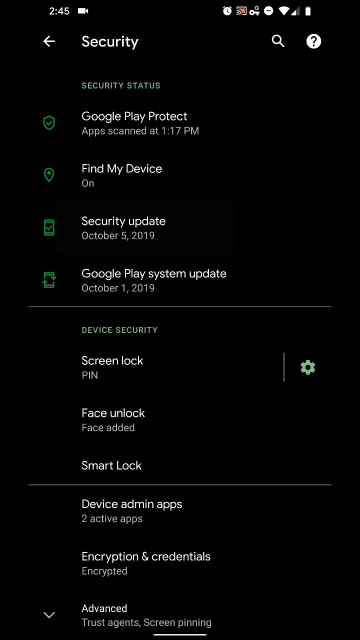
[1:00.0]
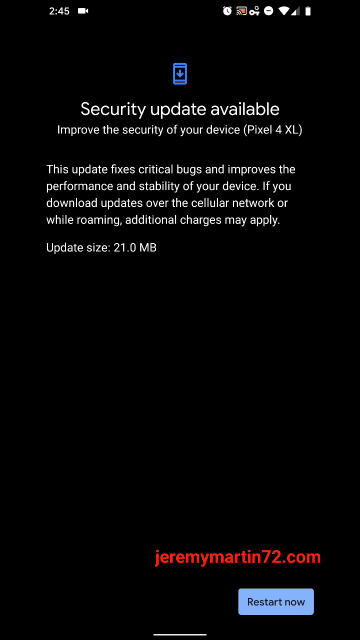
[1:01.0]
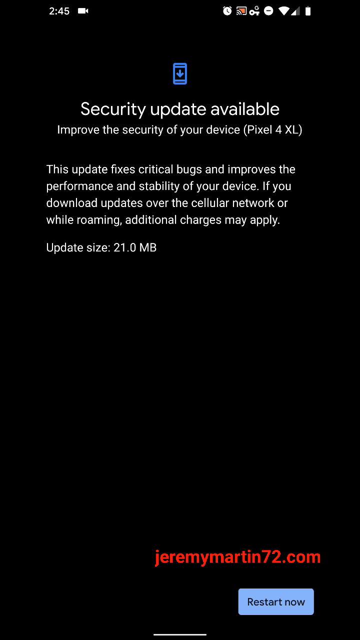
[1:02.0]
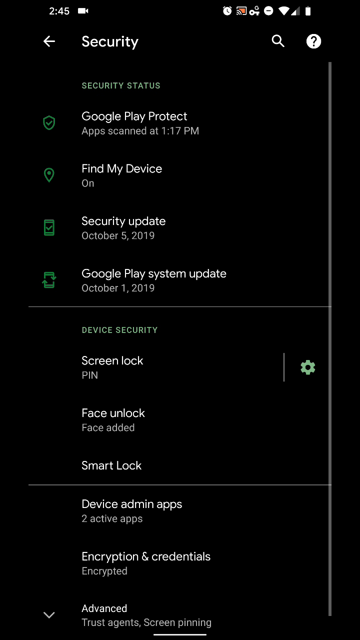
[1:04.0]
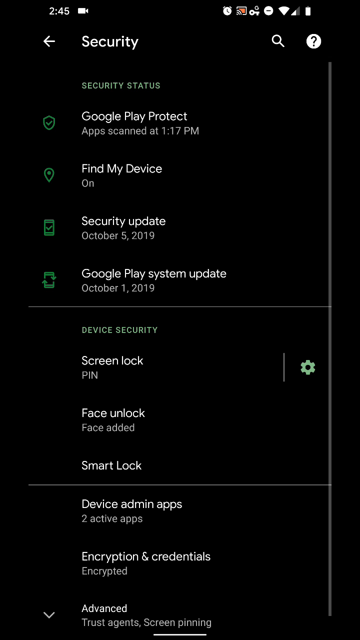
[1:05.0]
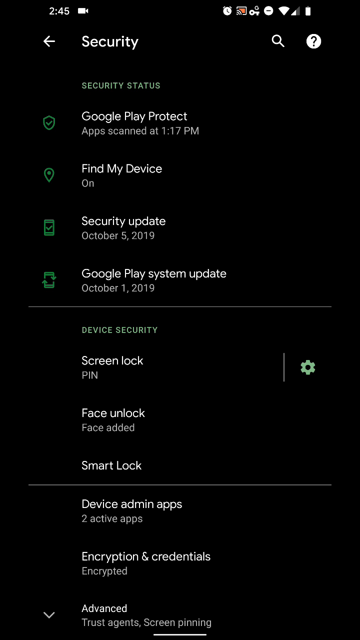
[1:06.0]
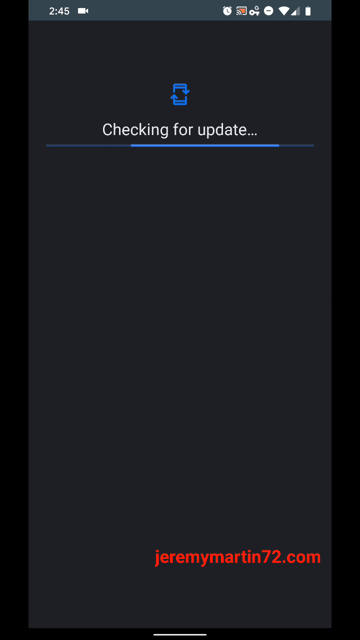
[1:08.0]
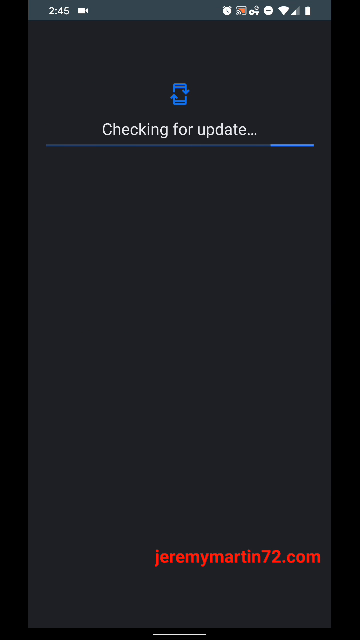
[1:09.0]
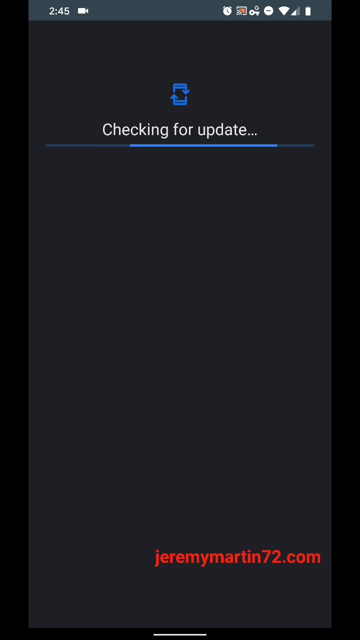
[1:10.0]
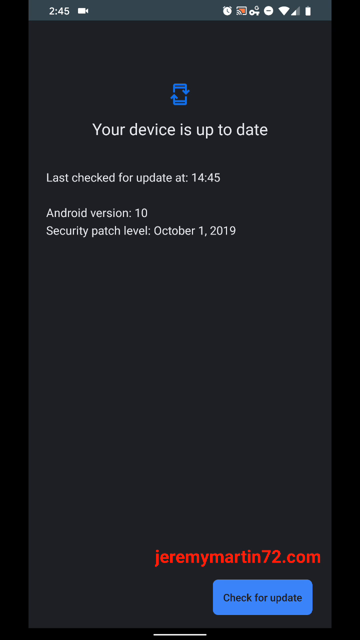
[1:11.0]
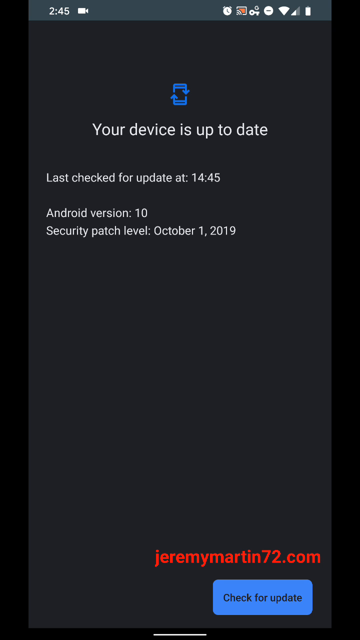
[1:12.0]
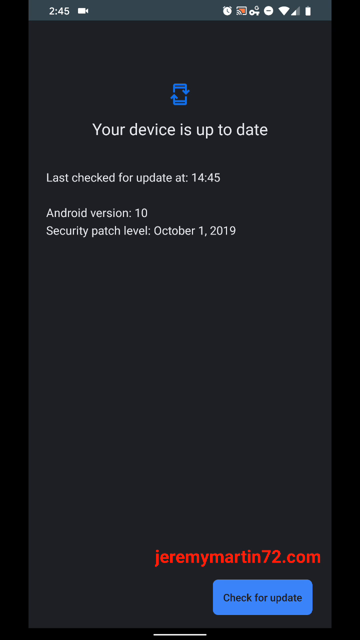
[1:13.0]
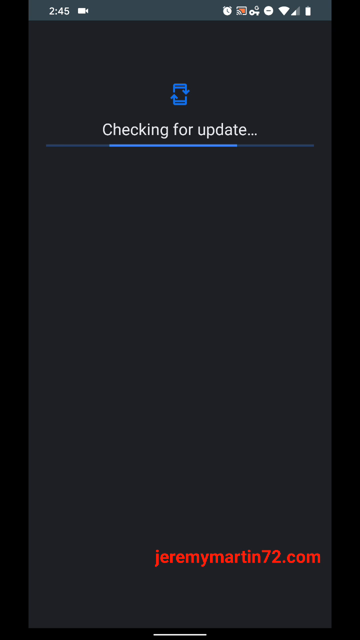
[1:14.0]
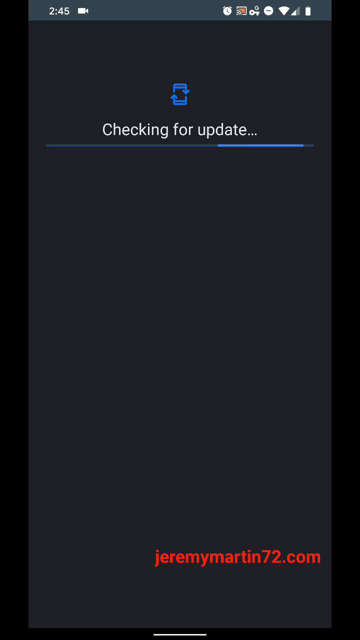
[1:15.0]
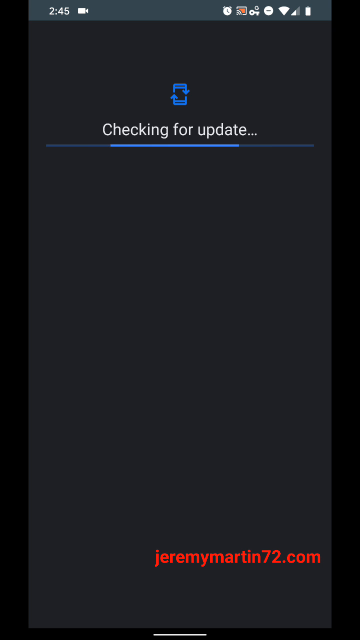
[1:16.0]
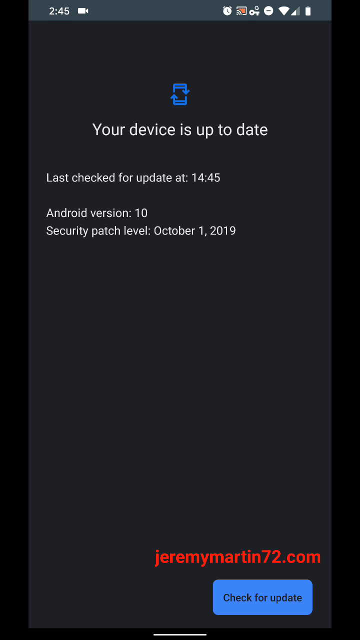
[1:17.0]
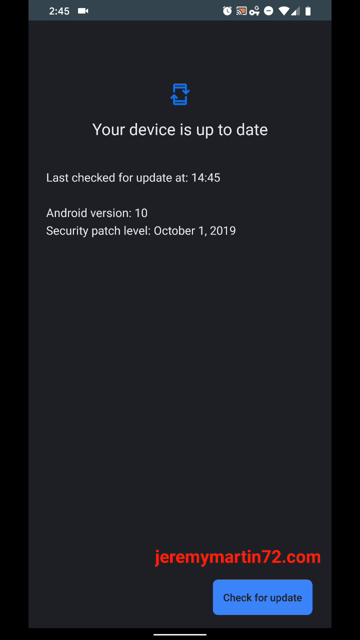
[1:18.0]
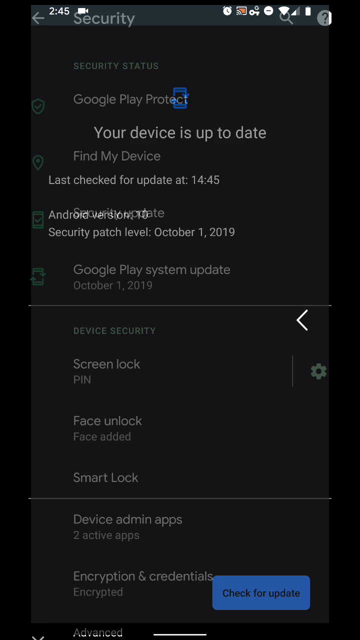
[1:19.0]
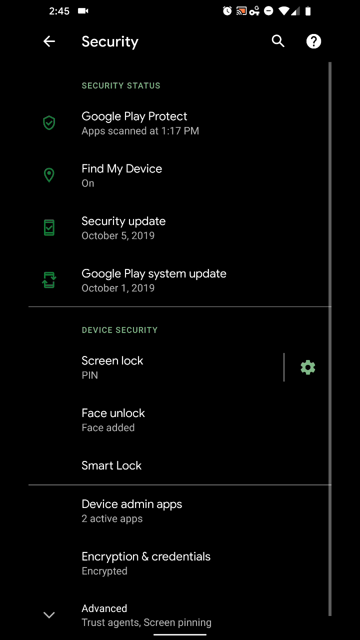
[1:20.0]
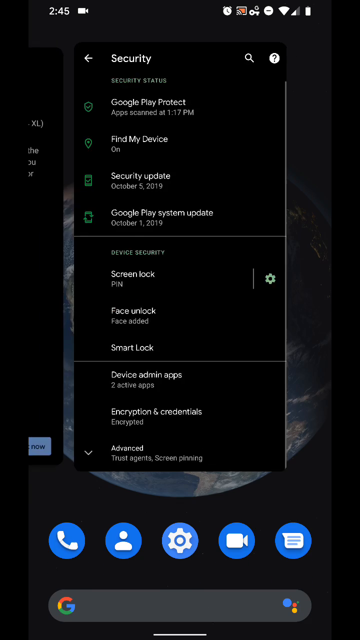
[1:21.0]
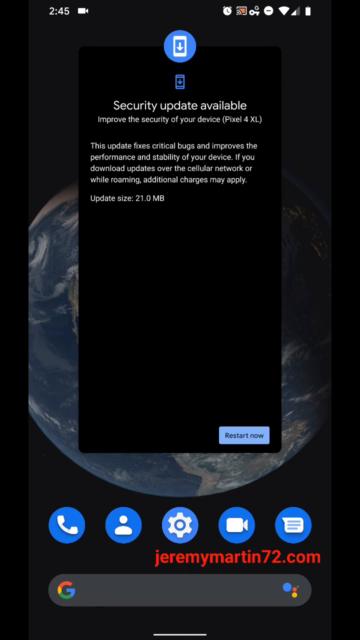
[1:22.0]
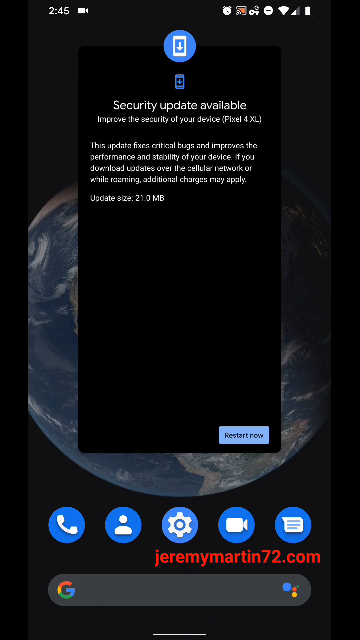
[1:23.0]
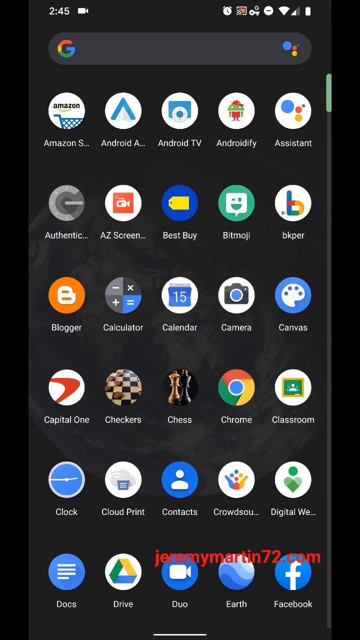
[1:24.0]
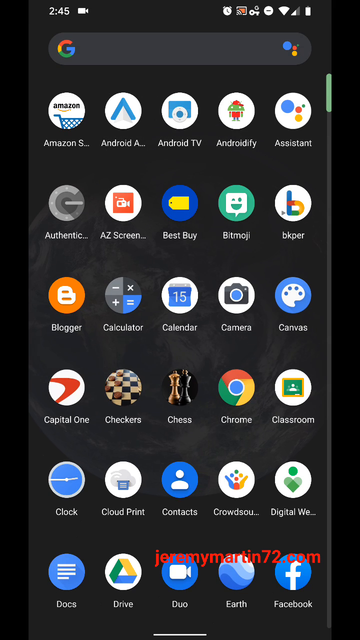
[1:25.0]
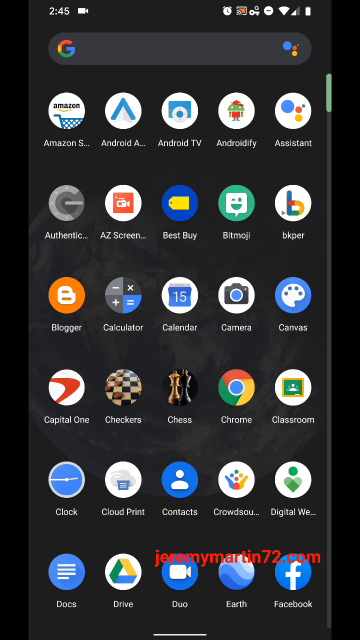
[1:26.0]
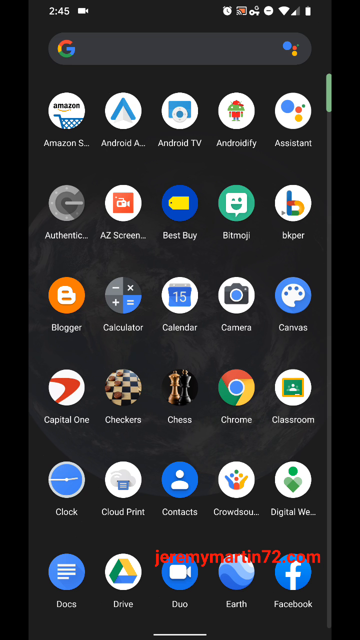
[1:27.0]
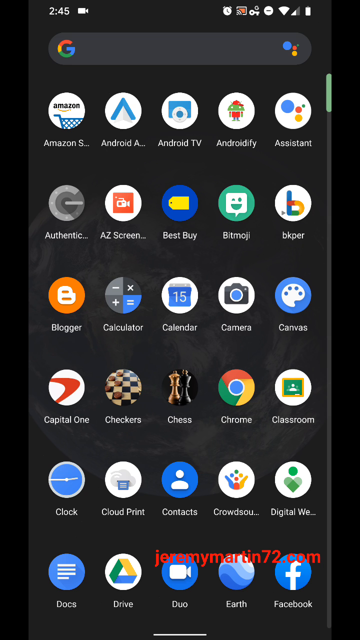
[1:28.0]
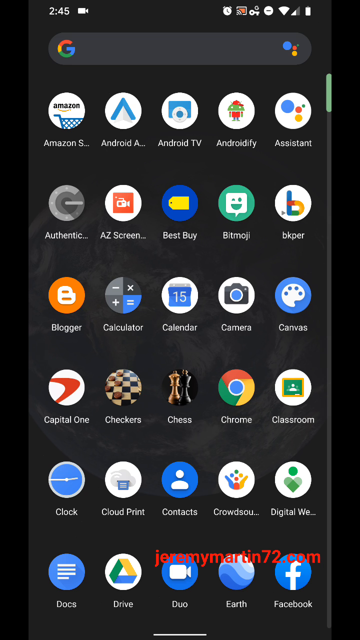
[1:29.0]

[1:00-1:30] The security update available screen appears once again as the user navigates from the security section of the settings back to the security update screen, and then back to the security section. The security options include status, device security, device admin and apps. The user selects the Google Play system section, and the next screen reads "checking for update": at the top is a blue phone icon, the text "checking for update" is in white, and a blue bar underneath moves from left to right. After several seconds it reads "your device is up to date last check for update at 14 45 android version 10 security patch level october 1st 2019", with a check for updates button in the bottom right corner. The user backs out to the security section. They then go to the screen showing their open tabs and navigate to the security update available tab, leaving it hovered open without selecting it, before swiping to bring up all of their icons and apps on another screen, which has the Google toolbar or search bar at the top and several rows of apps. They then navigate back to the security section.